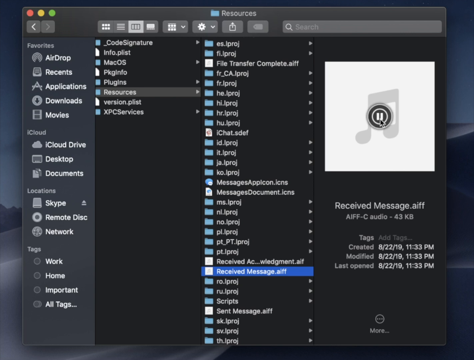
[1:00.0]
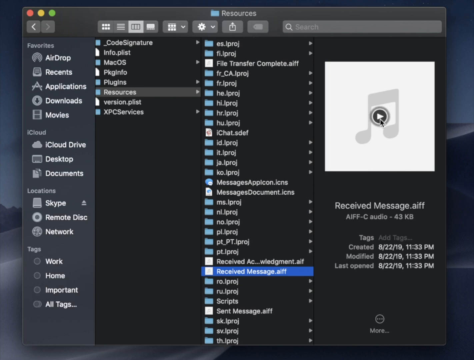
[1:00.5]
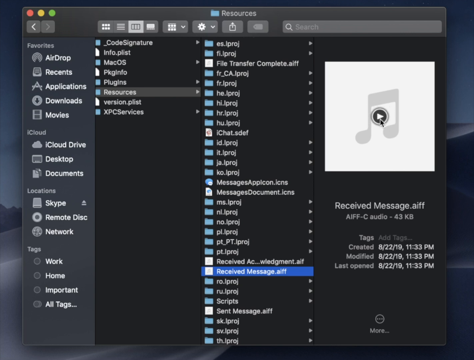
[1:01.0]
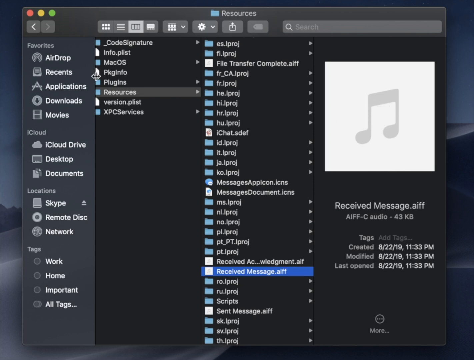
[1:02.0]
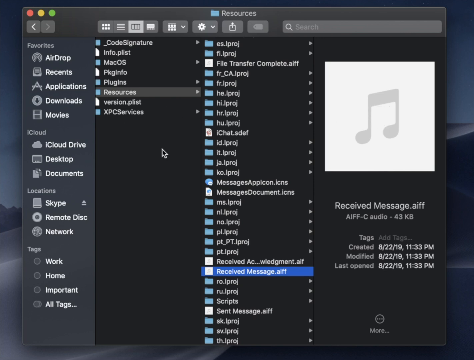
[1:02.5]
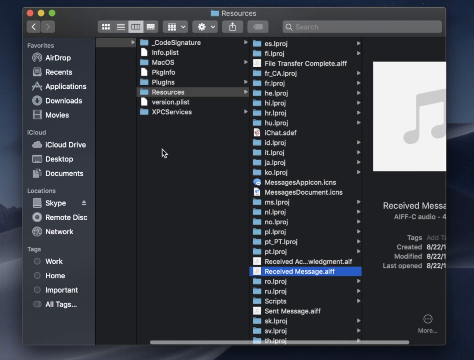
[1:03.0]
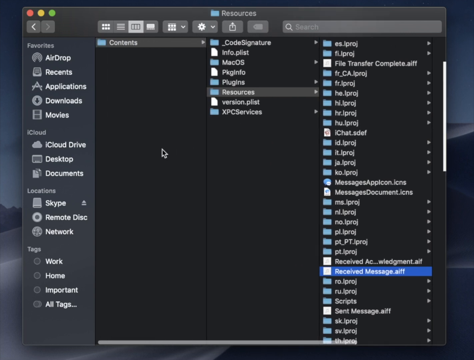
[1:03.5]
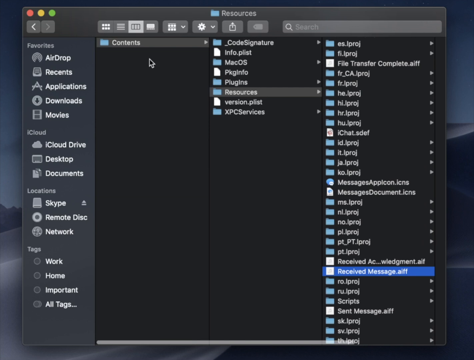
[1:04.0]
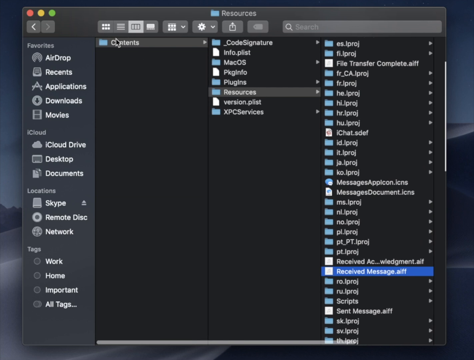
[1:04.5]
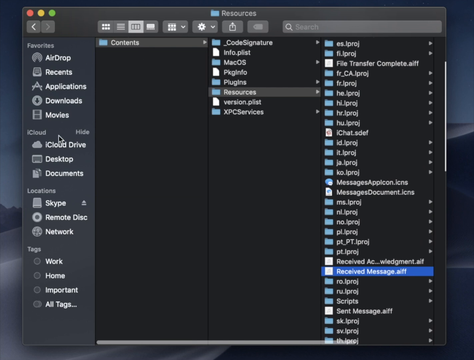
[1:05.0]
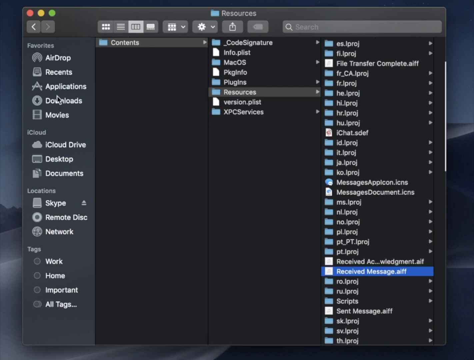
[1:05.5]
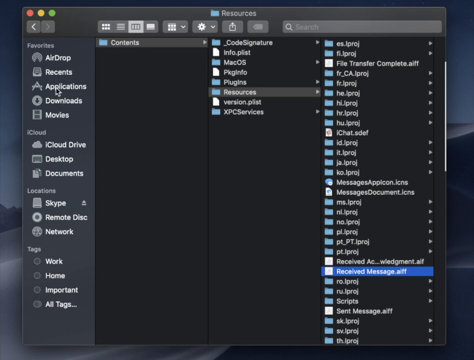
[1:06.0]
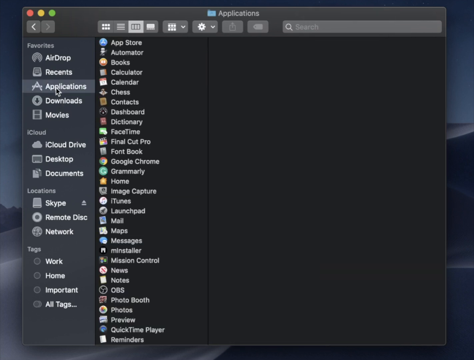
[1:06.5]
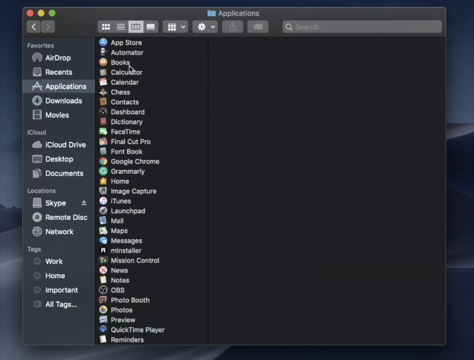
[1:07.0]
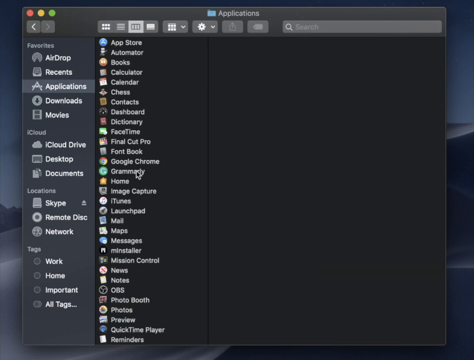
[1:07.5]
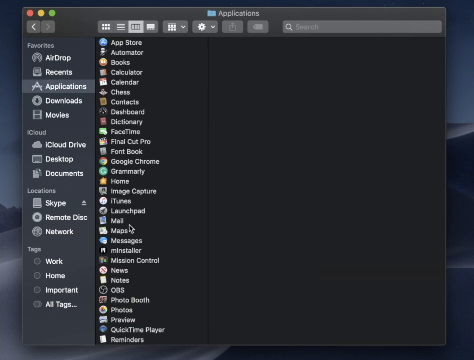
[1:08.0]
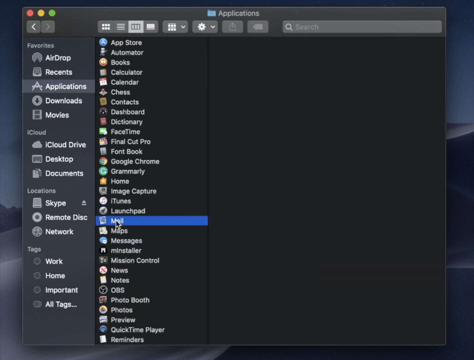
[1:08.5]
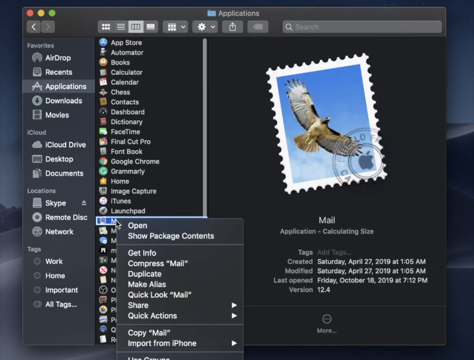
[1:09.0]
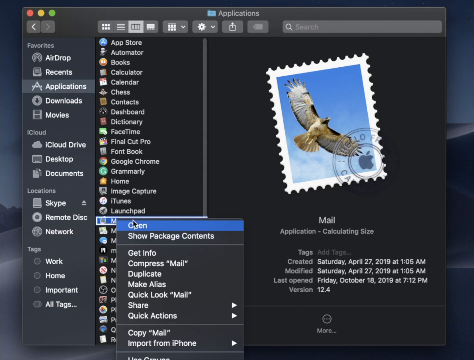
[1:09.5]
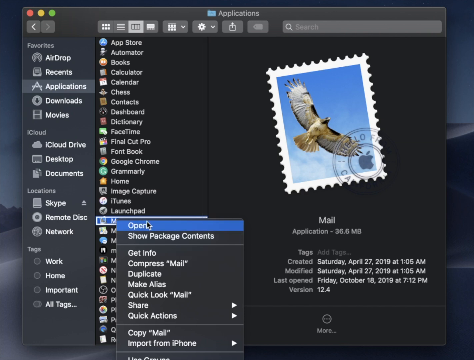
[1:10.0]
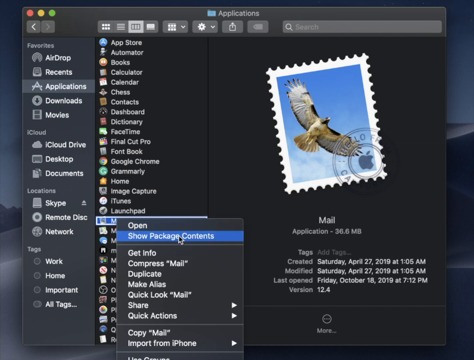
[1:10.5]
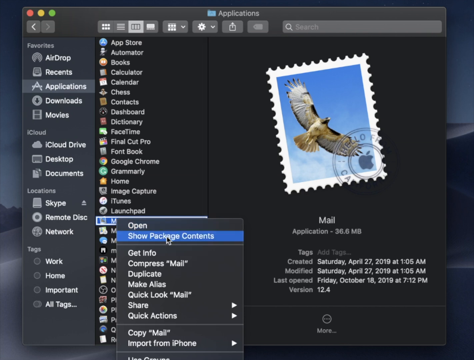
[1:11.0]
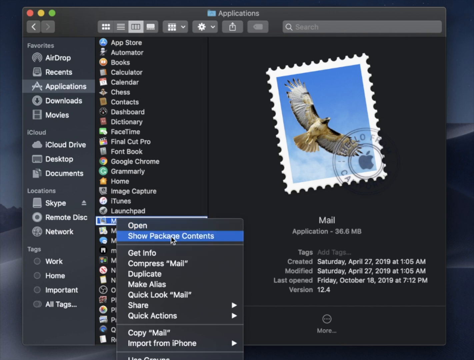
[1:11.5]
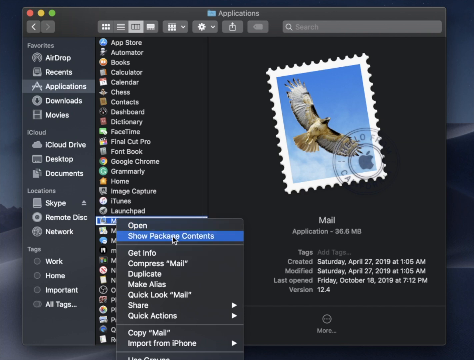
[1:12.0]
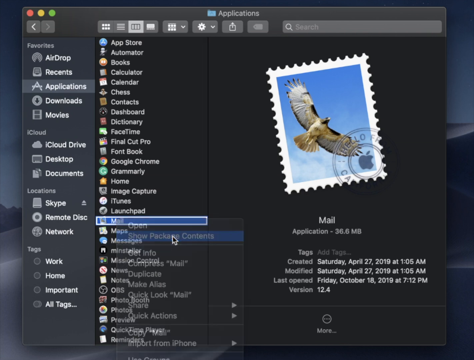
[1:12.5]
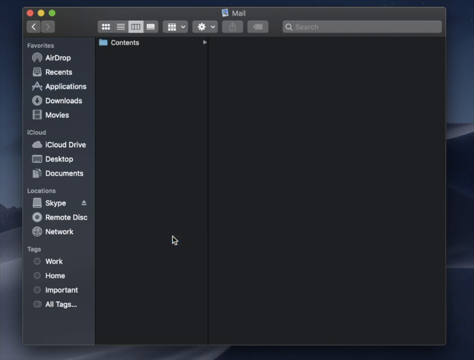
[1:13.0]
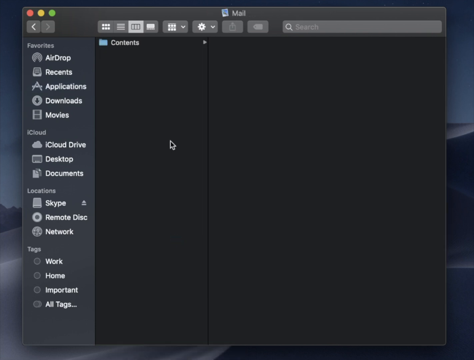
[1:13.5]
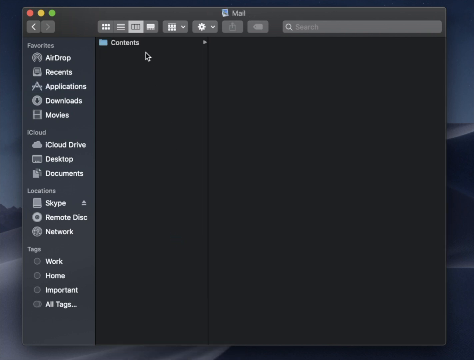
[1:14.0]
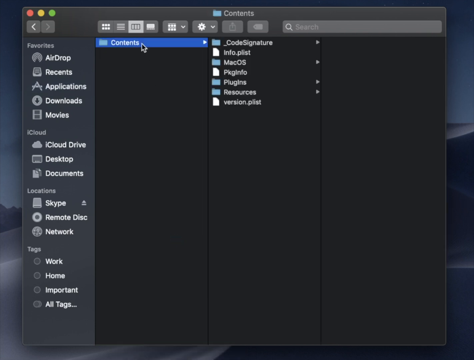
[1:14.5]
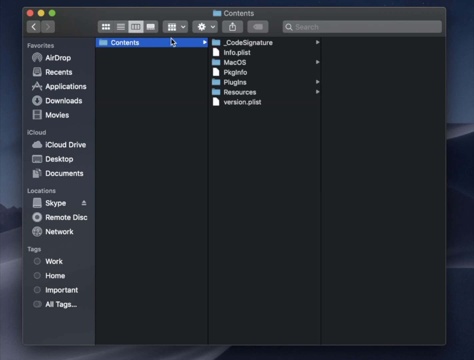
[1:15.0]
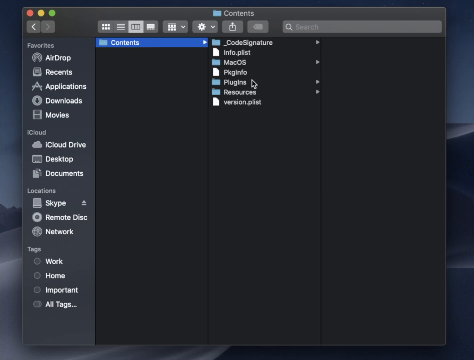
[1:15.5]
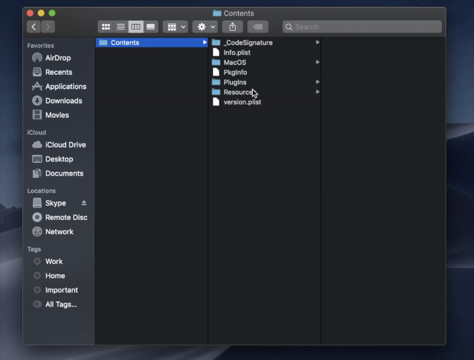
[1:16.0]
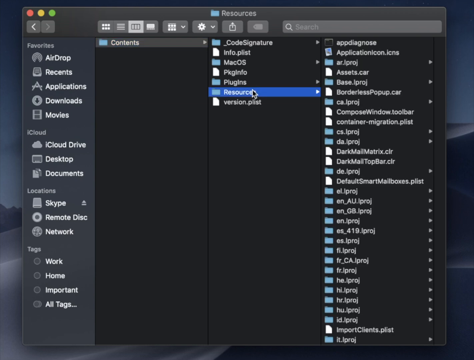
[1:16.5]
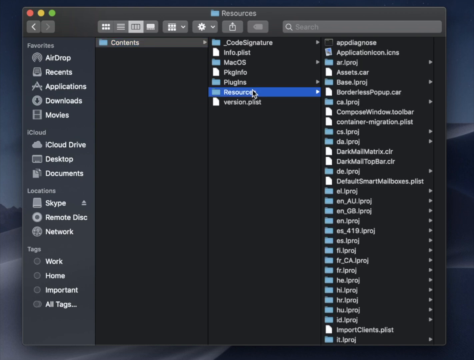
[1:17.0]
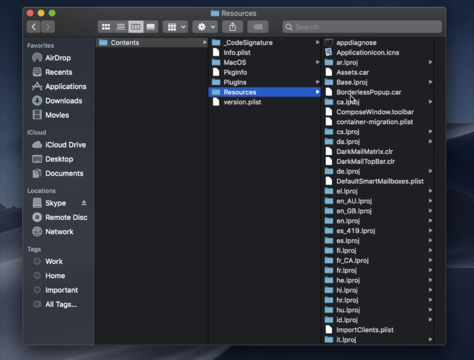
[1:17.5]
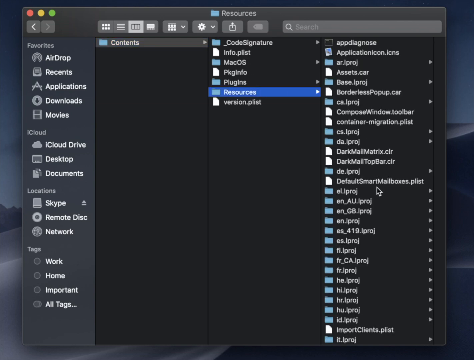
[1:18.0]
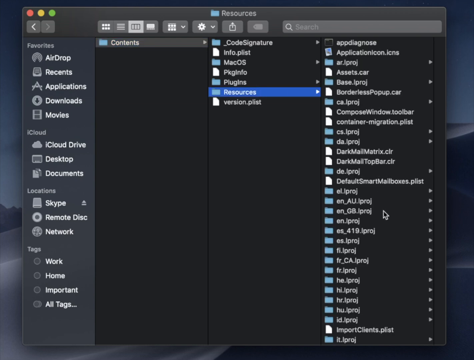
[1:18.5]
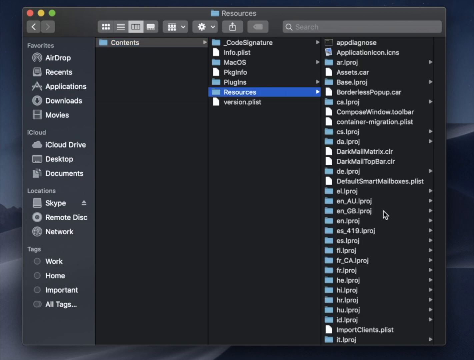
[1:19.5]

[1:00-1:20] The man scrolls sideways, goes back to the Applications folder, clicks on Mail, then Show Package Contents, then Contents. Many files and folders appear, such as code signature, MacOS, PlugIns and Resources, along with info.plist and version.plist files. When he clicks on Mail, a few details appear, such as the file size, when it was created, modified and last opened, and the version. He clicks on Resources, which shows many files, and it looks like he is looking for an audio file. He clicks the audio file ReceivedMessage.aiff, and many details about the file appear.